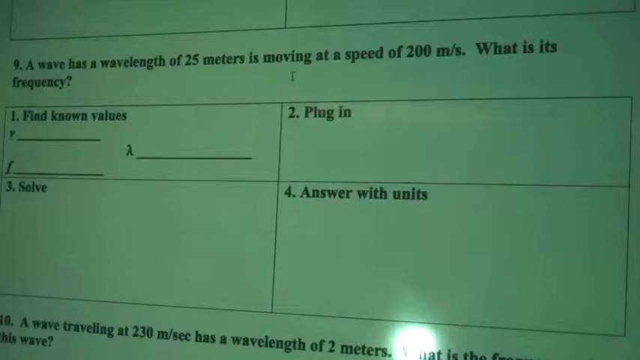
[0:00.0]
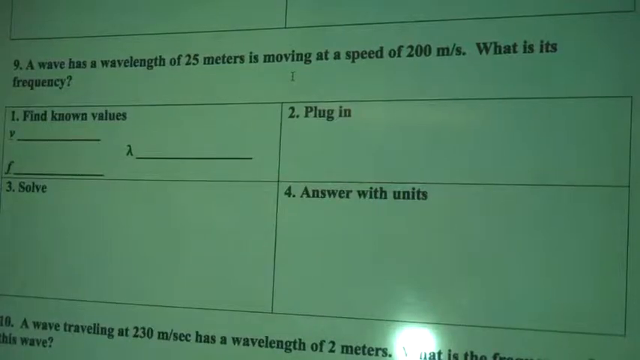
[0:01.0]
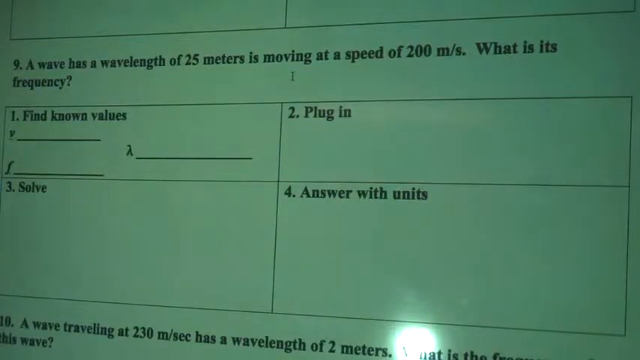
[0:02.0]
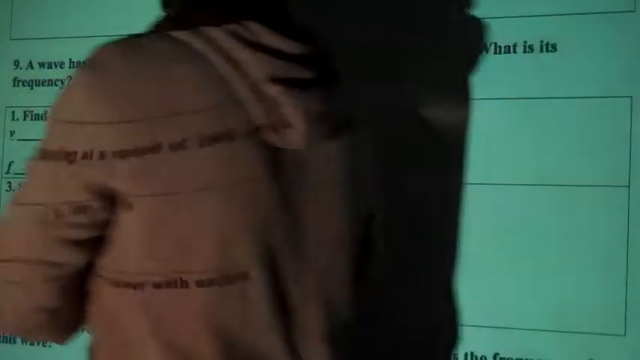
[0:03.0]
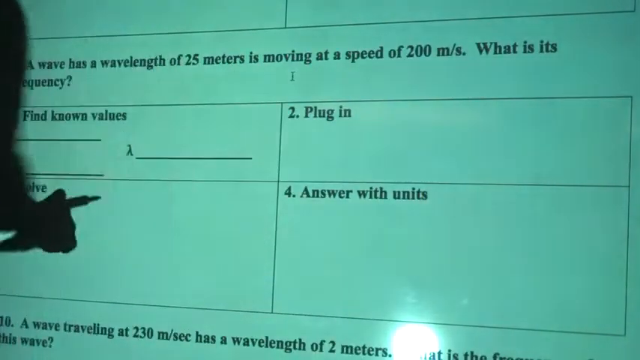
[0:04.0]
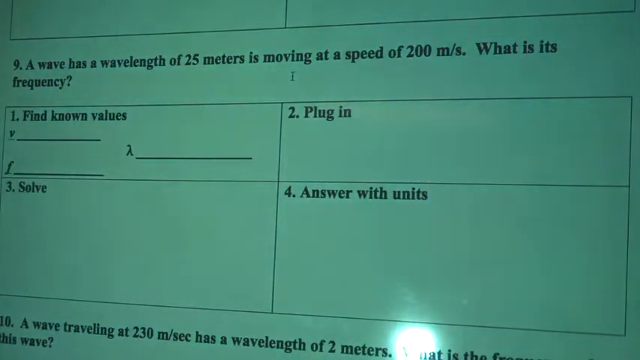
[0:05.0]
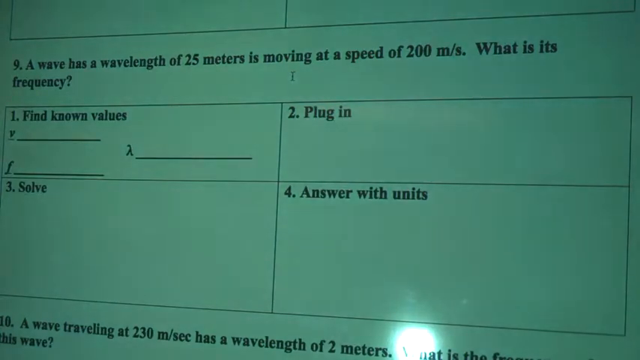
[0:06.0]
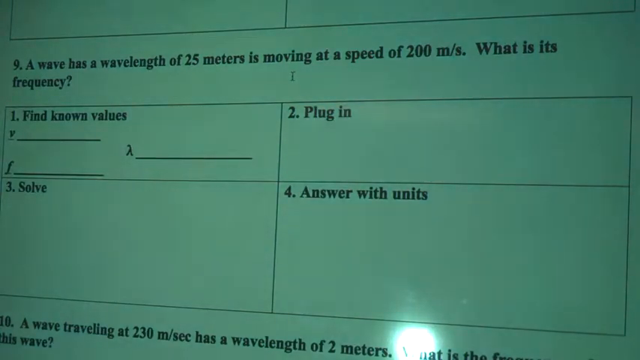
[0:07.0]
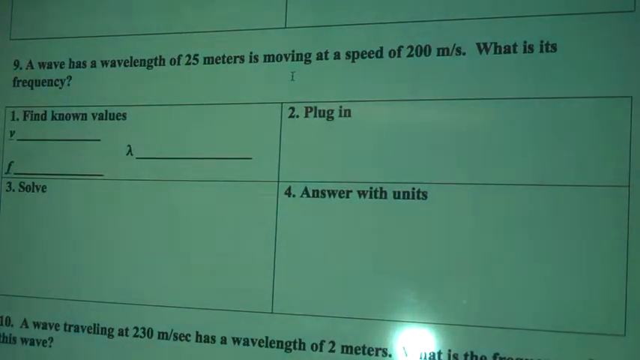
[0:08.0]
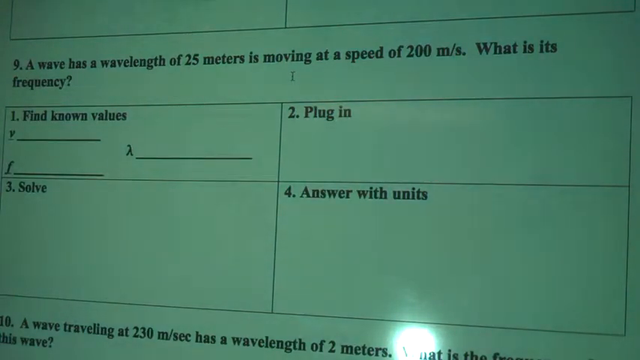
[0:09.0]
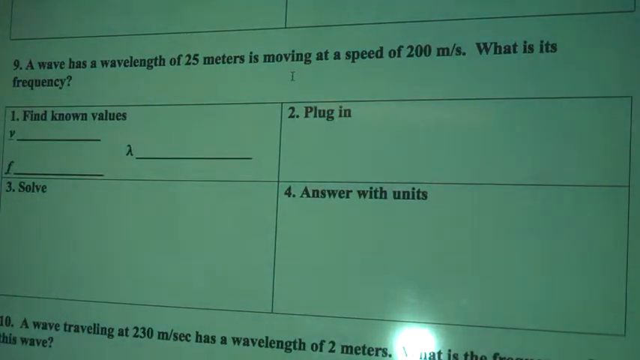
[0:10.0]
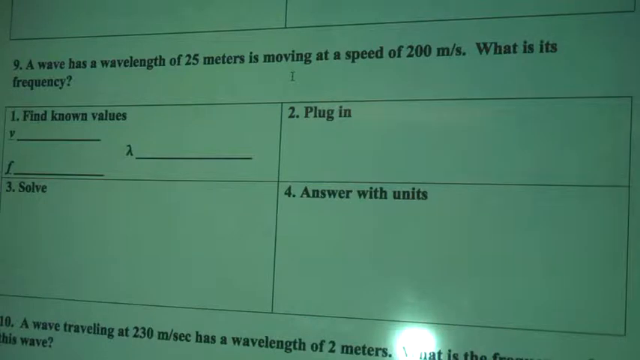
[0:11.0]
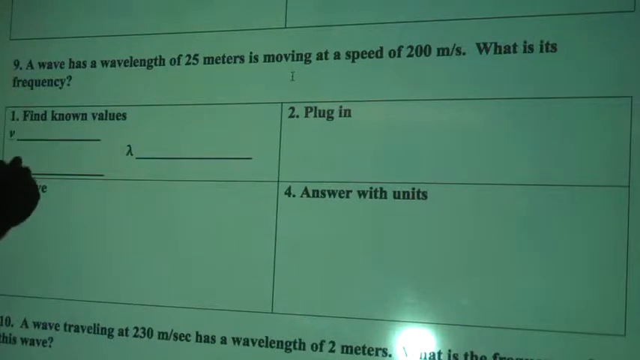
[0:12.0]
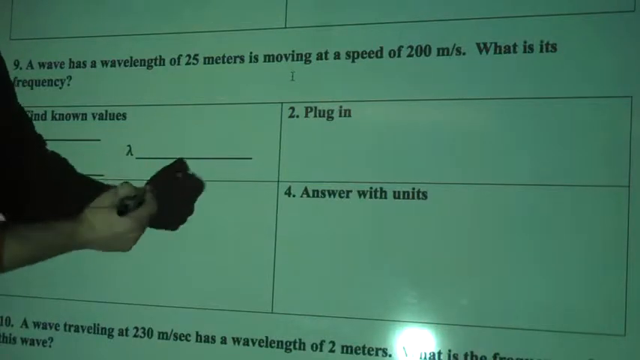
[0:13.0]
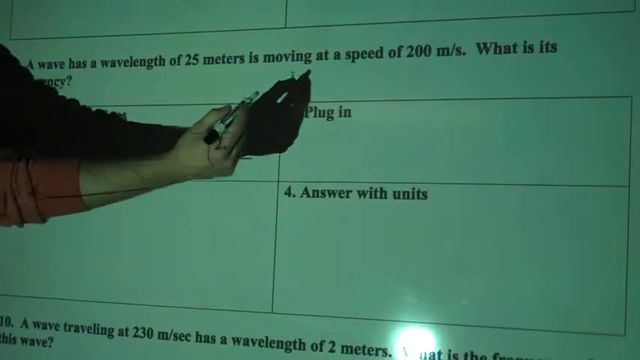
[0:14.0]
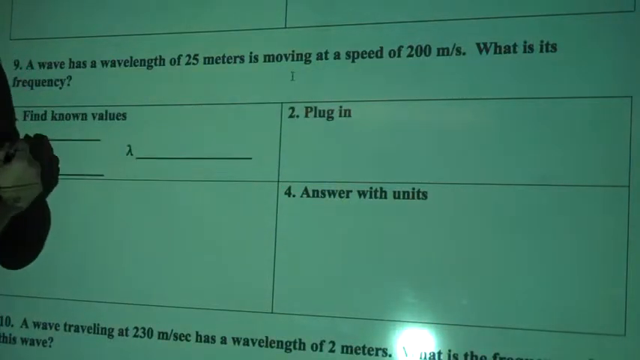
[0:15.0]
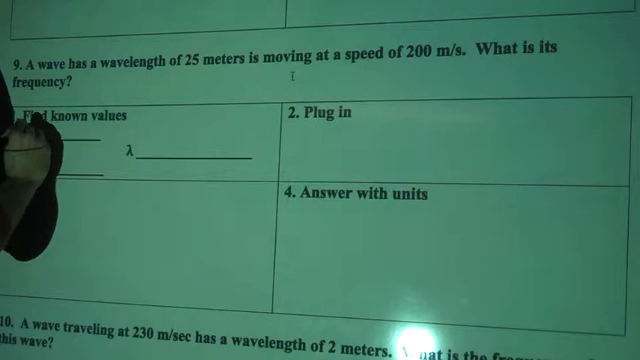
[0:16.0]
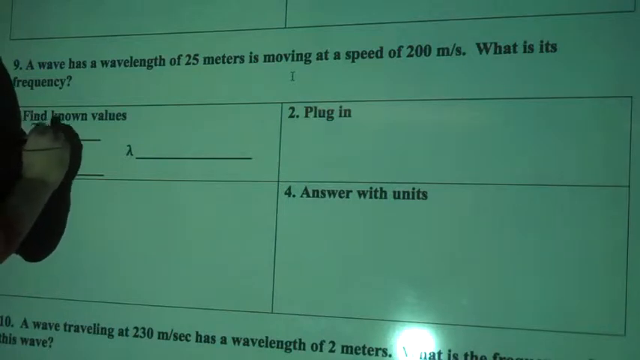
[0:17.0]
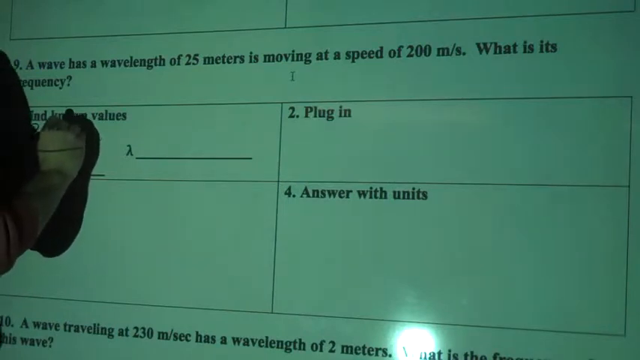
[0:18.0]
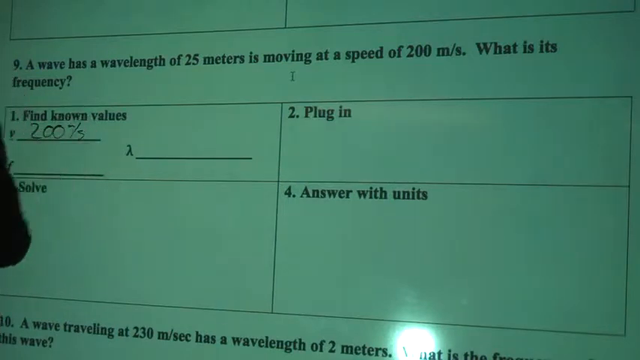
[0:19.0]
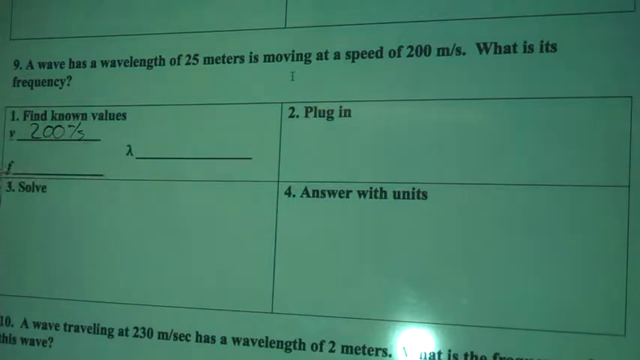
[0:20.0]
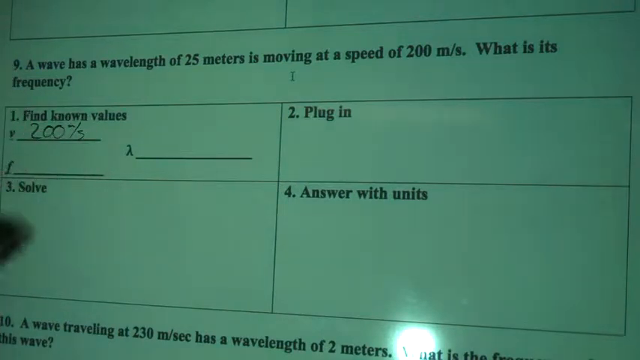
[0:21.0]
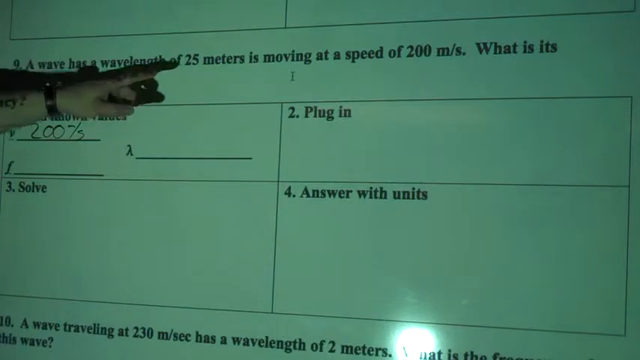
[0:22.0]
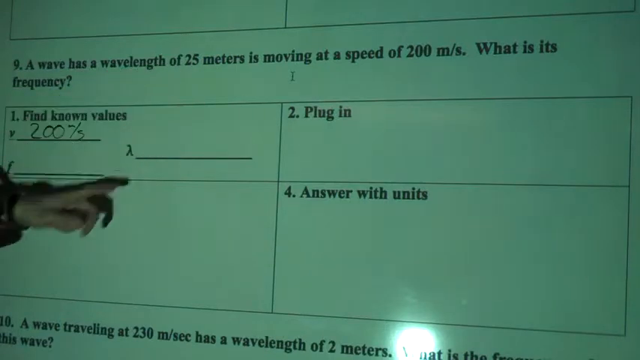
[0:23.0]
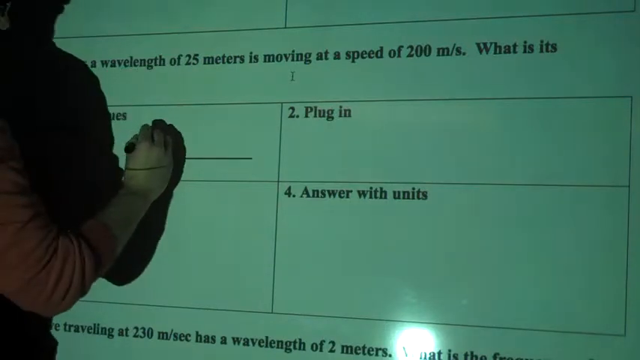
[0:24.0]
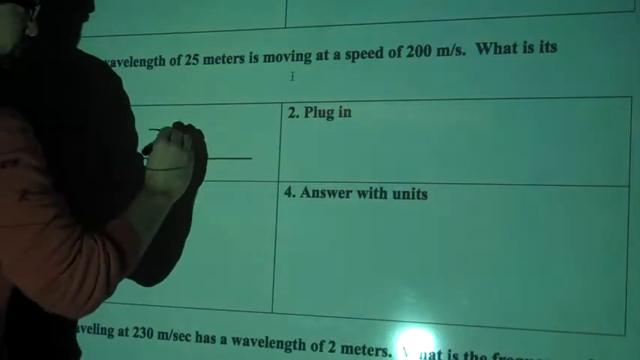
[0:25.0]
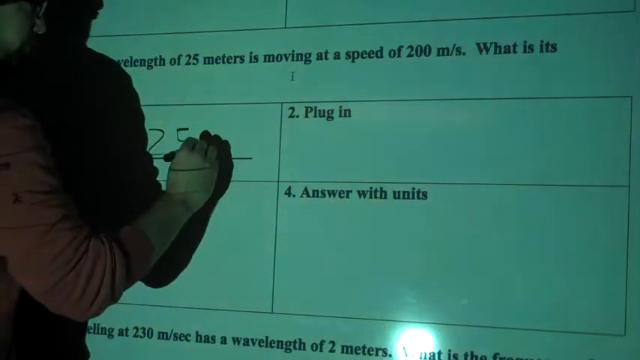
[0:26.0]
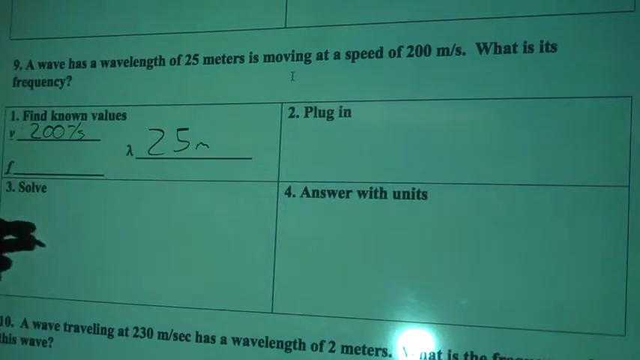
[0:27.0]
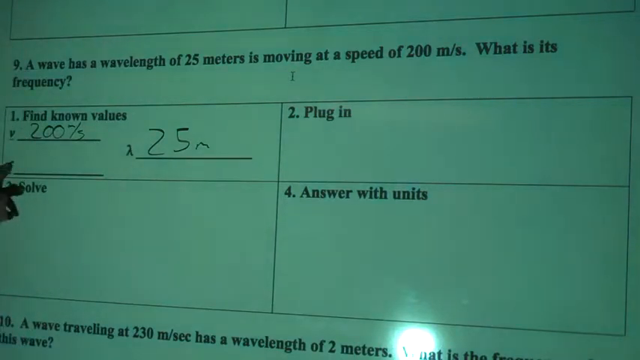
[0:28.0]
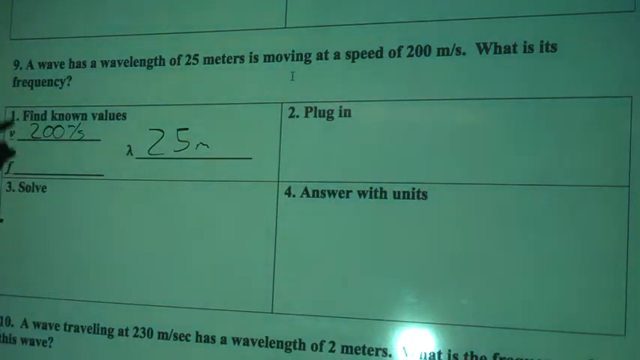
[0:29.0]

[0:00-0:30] A screen shows a question, almost like a test. The question is apparently number nine and reads "a wave has a wavelength of 25 meters, is moving at a speed of 200 miles per second. What is its frequency?" Below it are four boxes for the parts of the answer: "find known values," "plug in," "solve," and "answer with units." A professor appears to be solving it live. In the first box he writes 200 for the first part, then 25M for the second part, and he looks like he is about to move on to the third part.